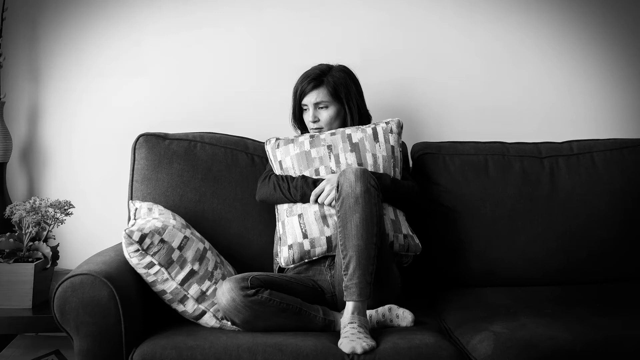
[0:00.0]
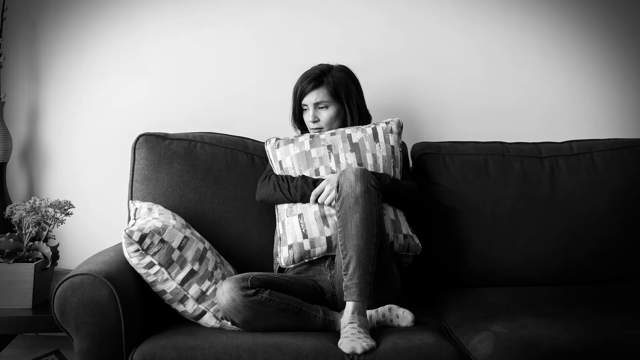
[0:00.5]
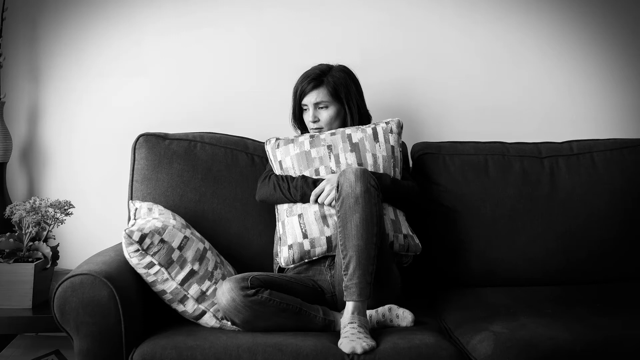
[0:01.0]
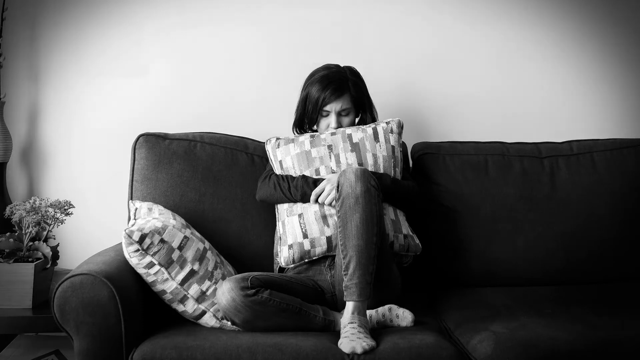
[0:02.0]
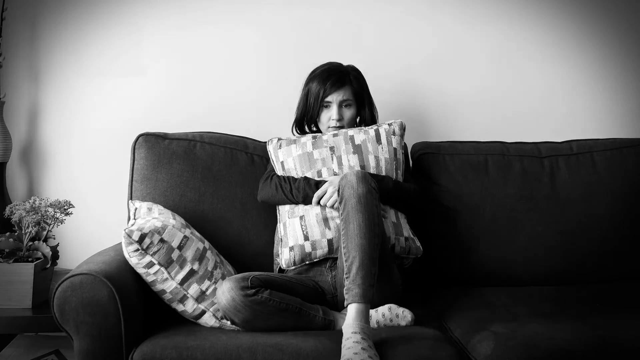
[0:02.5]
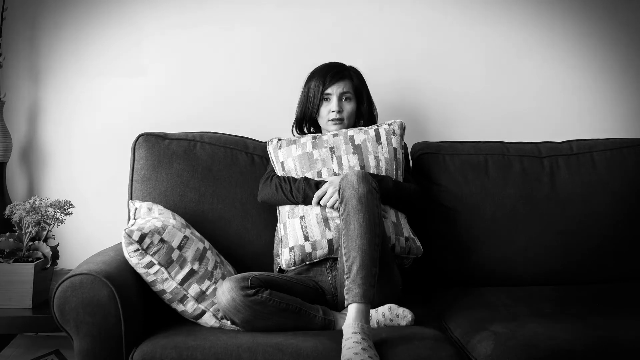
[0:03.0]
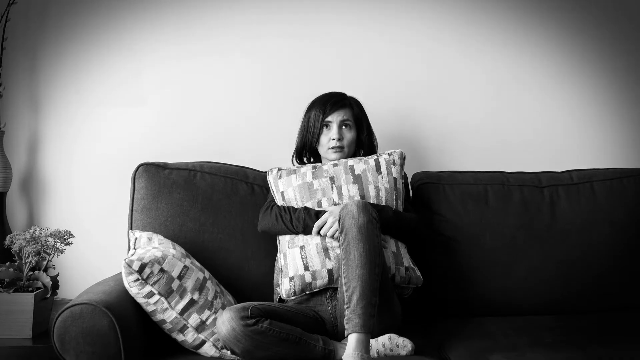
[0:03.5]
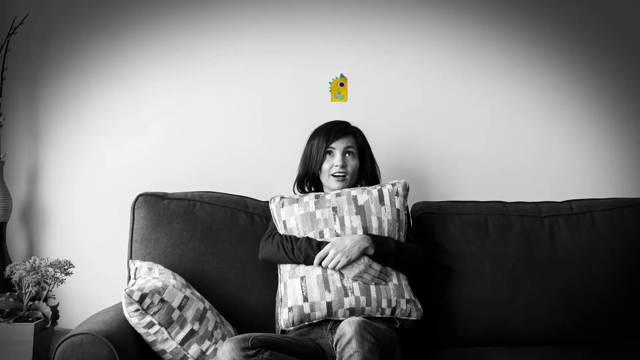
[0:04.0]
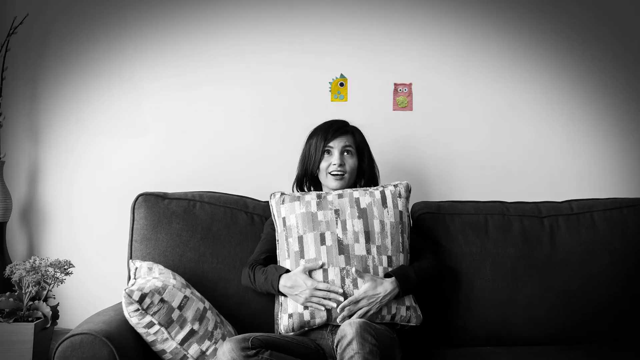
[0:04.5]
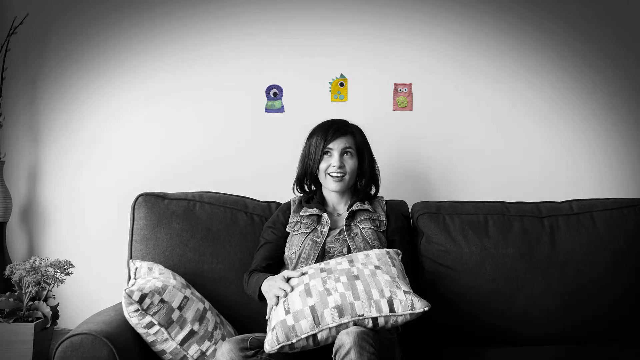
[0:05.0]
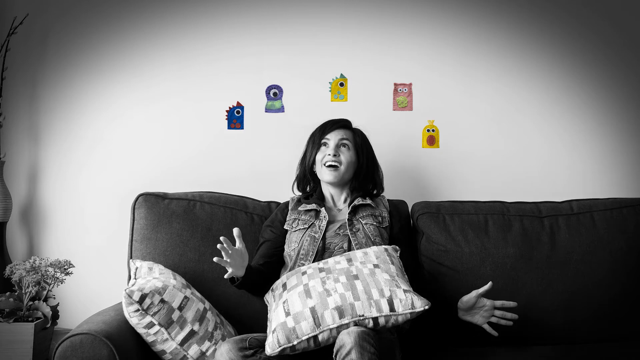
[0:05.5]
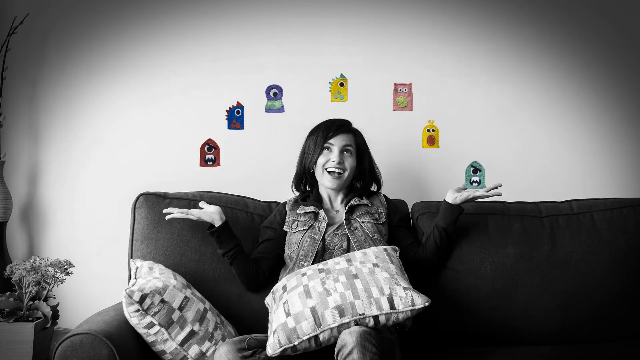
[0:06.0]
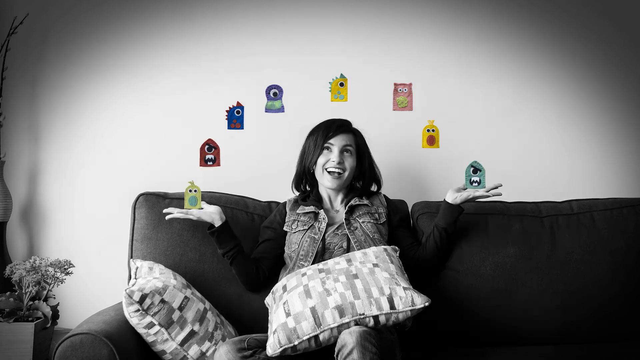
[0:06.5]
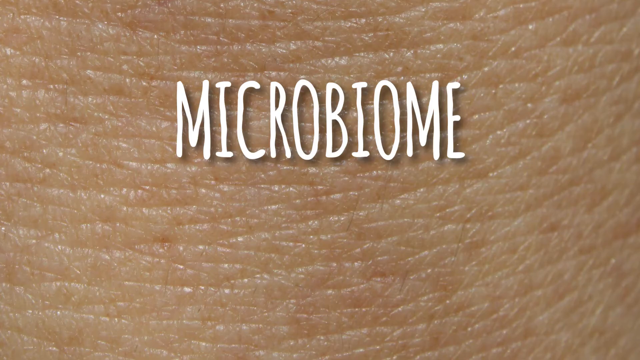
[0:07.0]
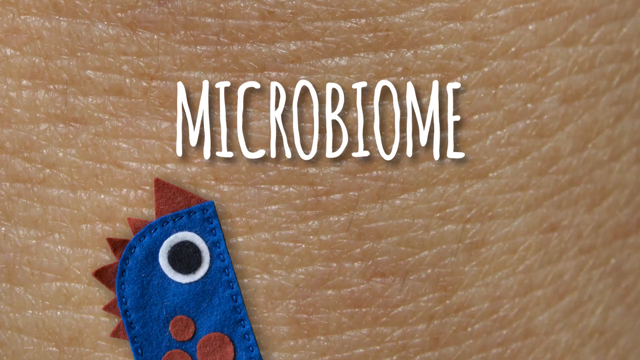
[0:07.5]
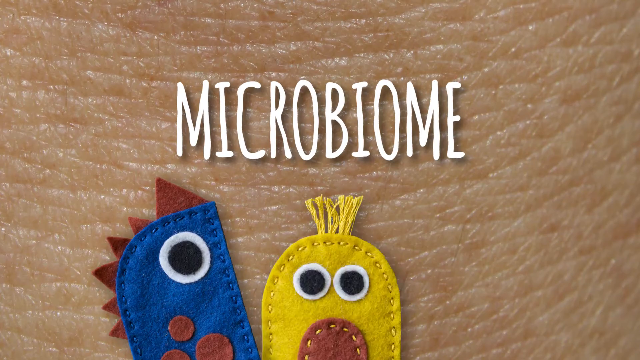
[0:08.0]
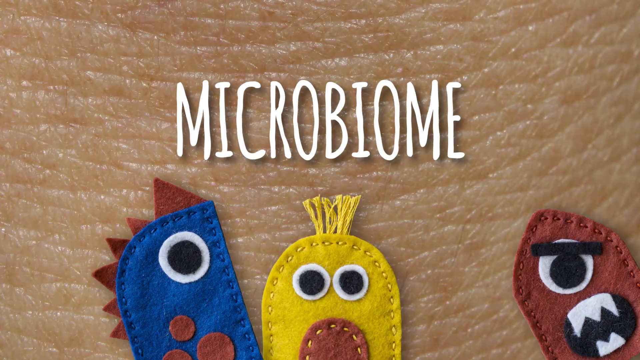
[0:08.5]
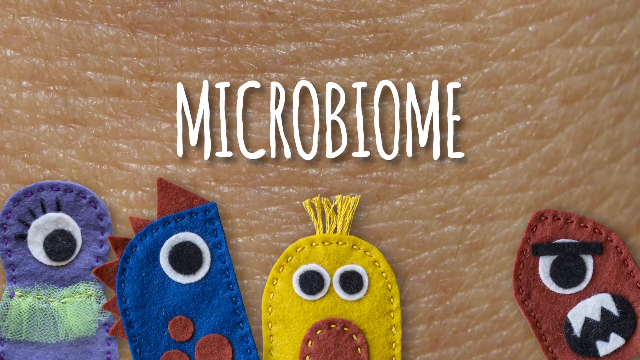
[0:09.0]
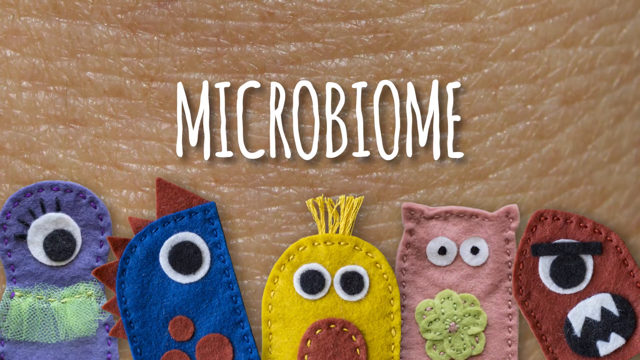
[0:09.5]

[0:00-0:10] A woman sits on a couch, looking to be in distress as she hugs a pillow, with another pillow on her left-hand side. On the left side of the screen there is what looks like decoration, along with flower pots. More images follow that show movement: a body moves, and pop-ups of what look like cuts and illustrations of symbols appear. A shot shows what looks like human skin, and a white subtitle appears on screen reading "Mycobiome". A group of toy-like figures with eyes then appears, four in all; three seem to have one eye and another has two eyes, and one of them, an owl, has two eyes and a bigger nose.